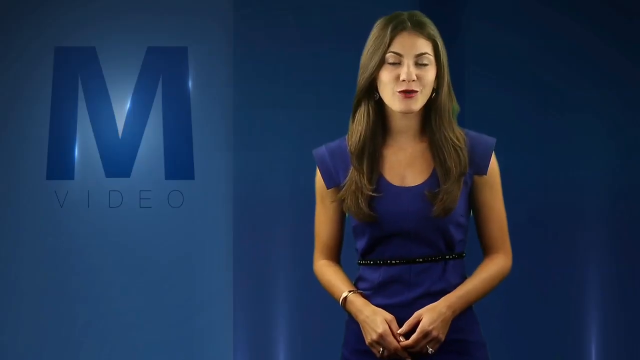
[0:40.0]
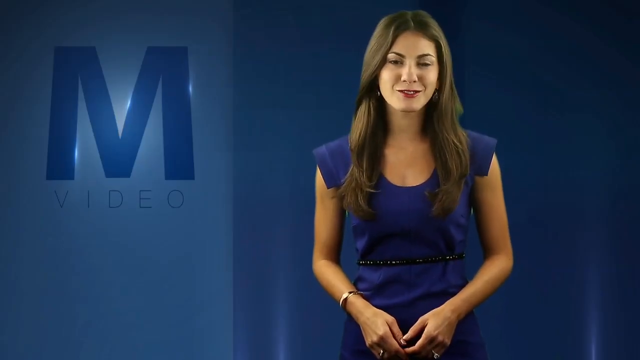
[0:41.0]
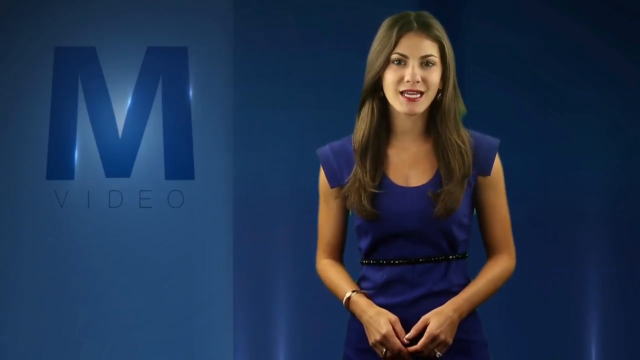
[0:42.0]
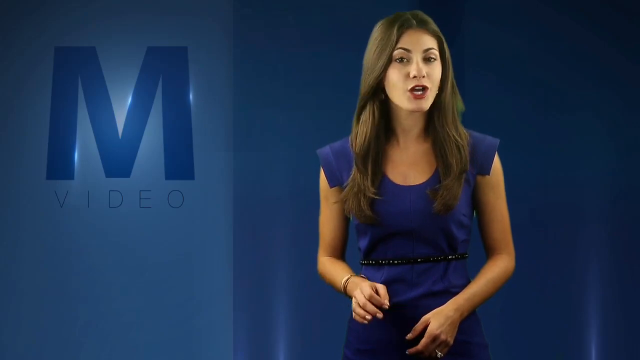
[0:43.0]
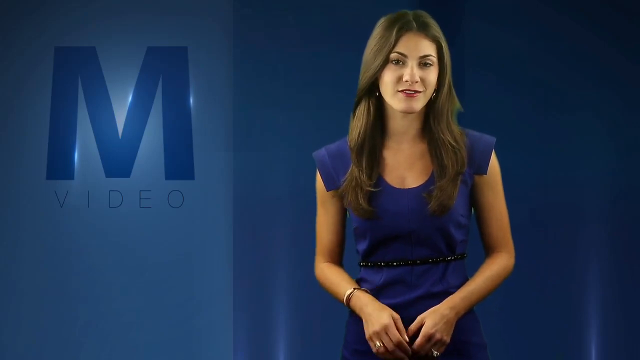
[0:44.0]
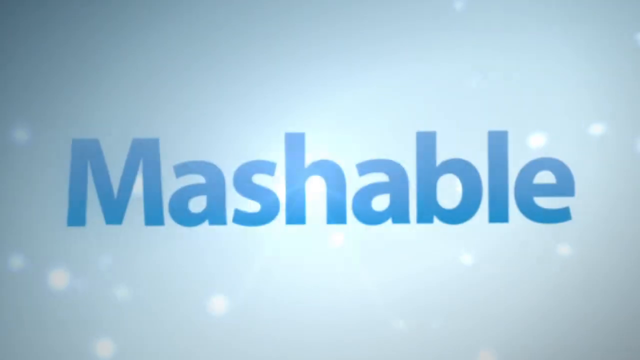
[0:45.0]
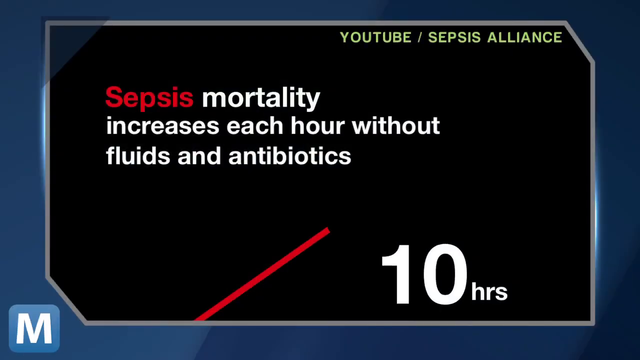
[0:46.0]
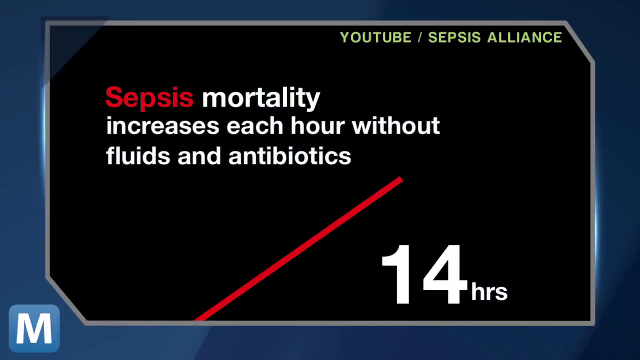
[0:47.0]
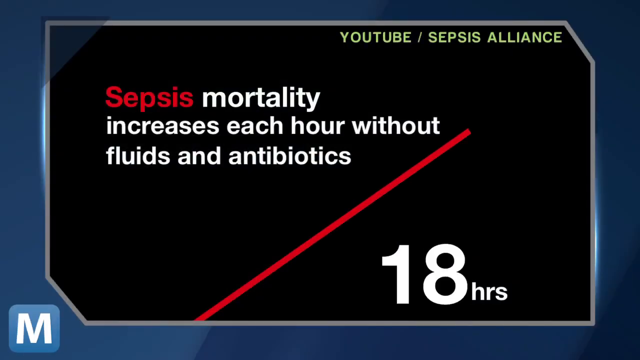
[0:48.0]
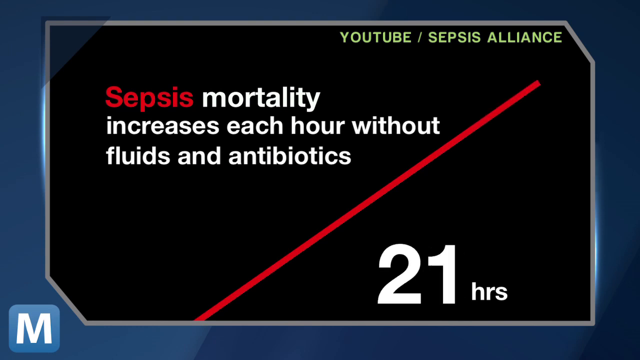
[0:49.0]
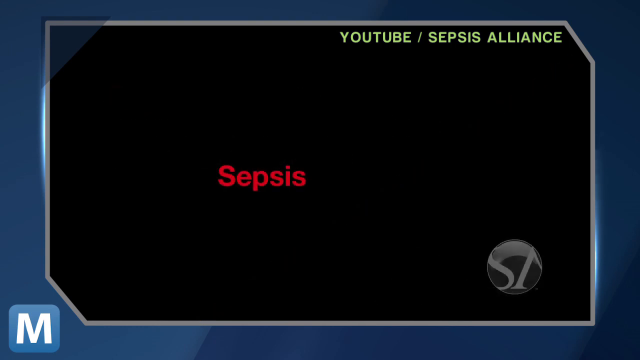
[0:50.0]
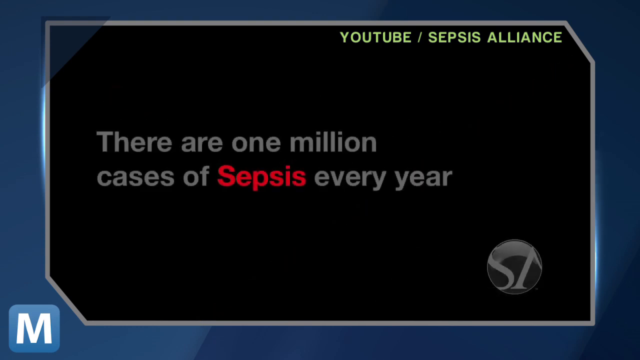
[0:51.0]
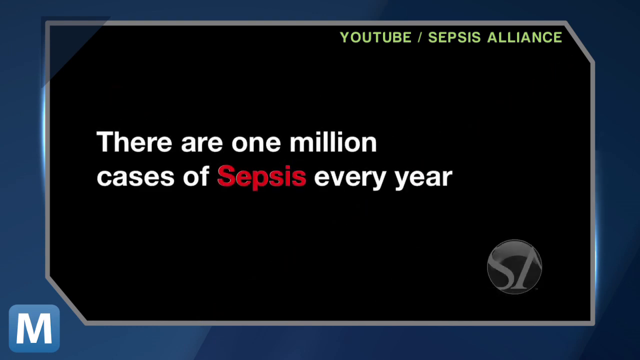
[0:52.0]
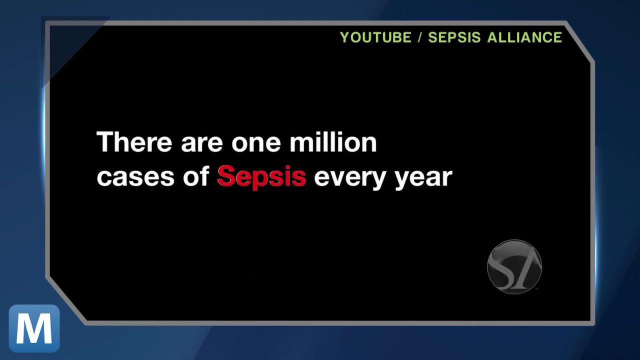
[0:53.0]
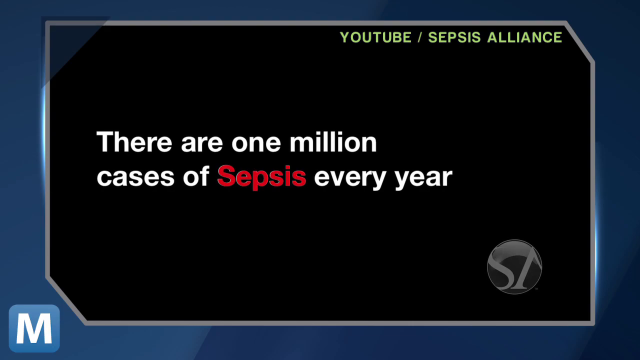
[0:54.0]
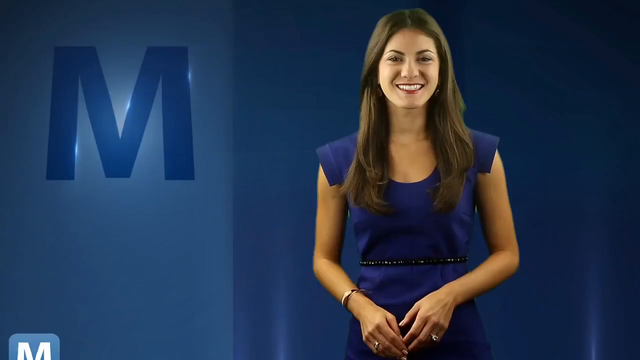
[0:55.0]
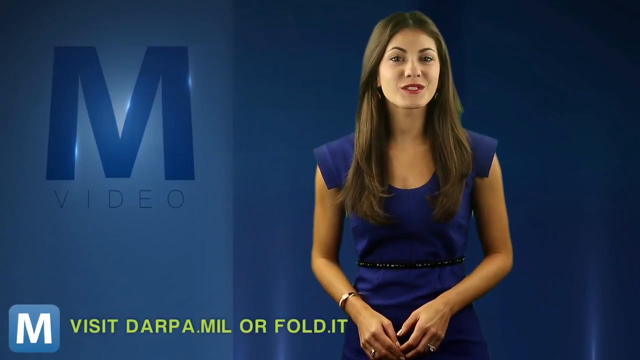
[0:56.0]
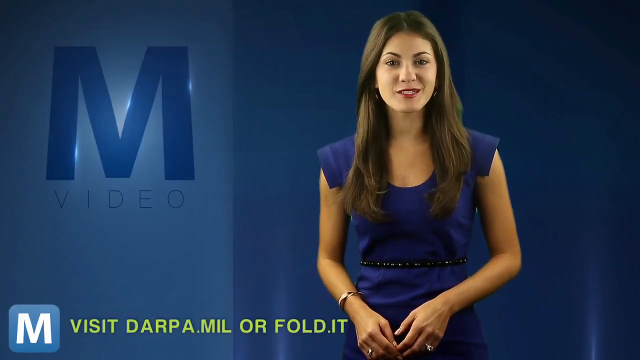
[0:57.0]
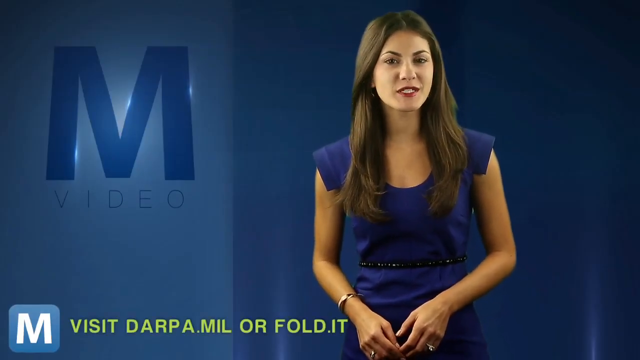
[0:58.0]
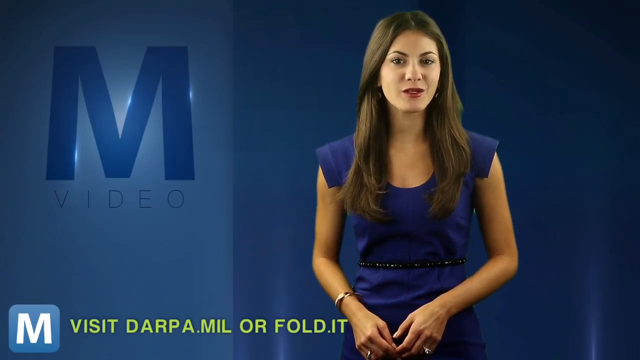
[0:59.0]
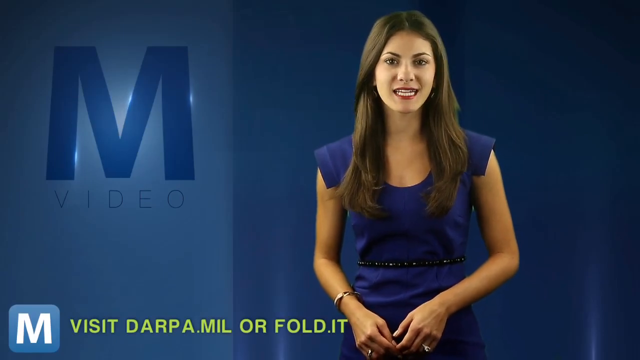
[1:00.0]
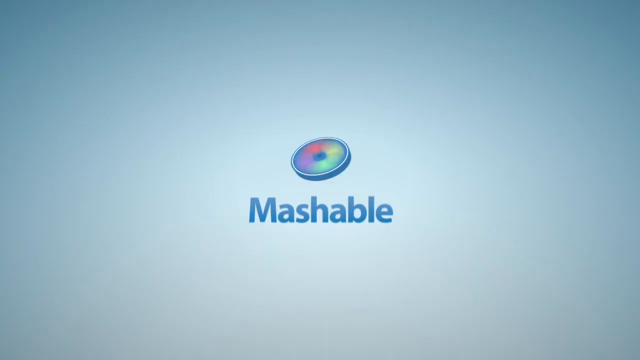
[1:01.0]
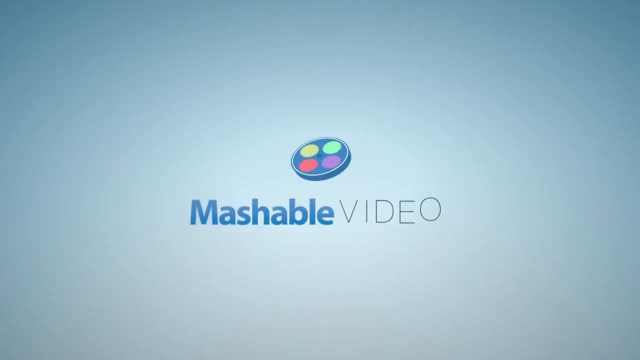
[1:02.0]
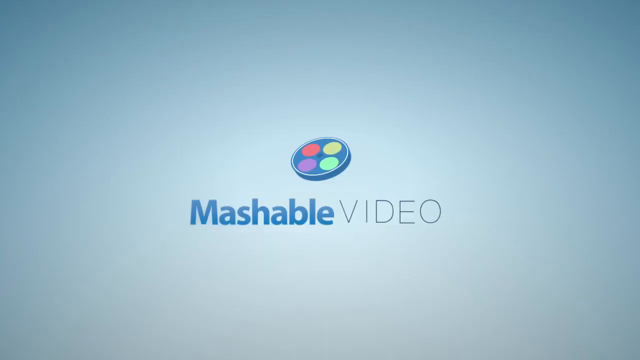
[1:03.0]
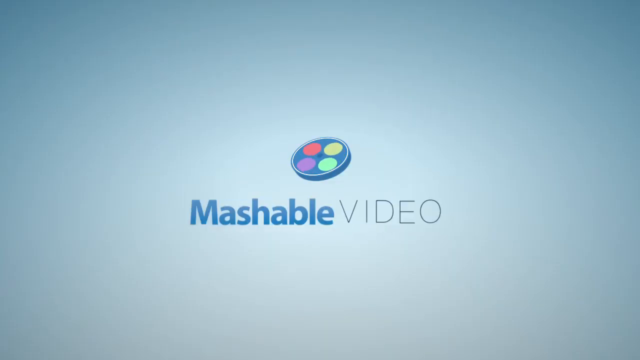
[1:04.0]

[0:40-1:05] In the upper left corner is a dark blue M logo with the word "video" in smaller text. To the right is a young woman, an attractive, thin, Caucasian brunette in her twenties, wearing a blue dress with short sleeves. She nods her head back and forth as she speaks toward the camera, and her right hand lifts slightly, showing a ring on her finger. The screen then switches to a dark blue background with a black rectangle in the center filled with text reading "sepsis mortality increases each hour without fluids and antibiotics". There is a diagonal red line, and below it white block text reads "14 hours". In the upper right corner, lime green text reads "YouTube/sepsis alliance". The hours tick by, and then the screen changes to read "there are one million cases of sepsis every year".